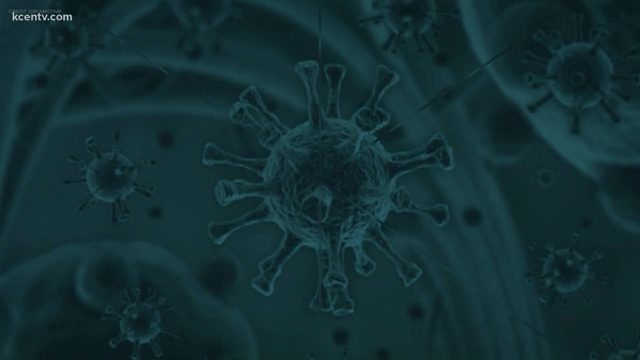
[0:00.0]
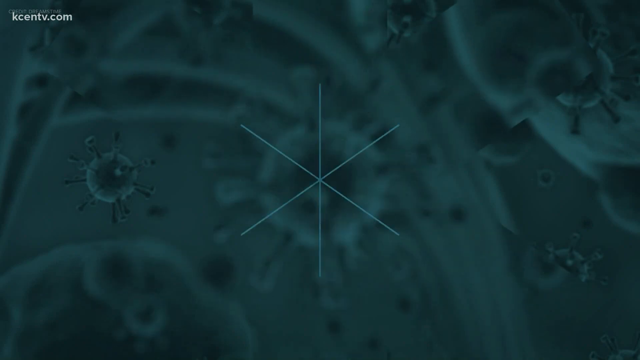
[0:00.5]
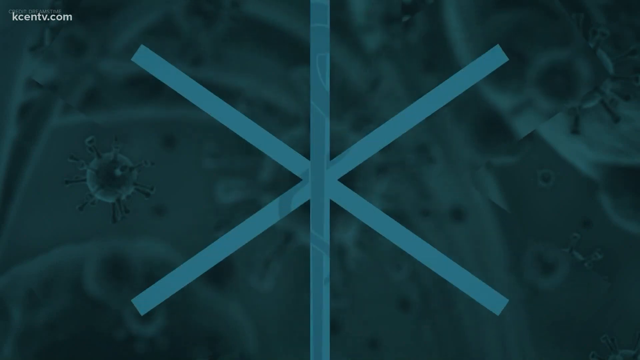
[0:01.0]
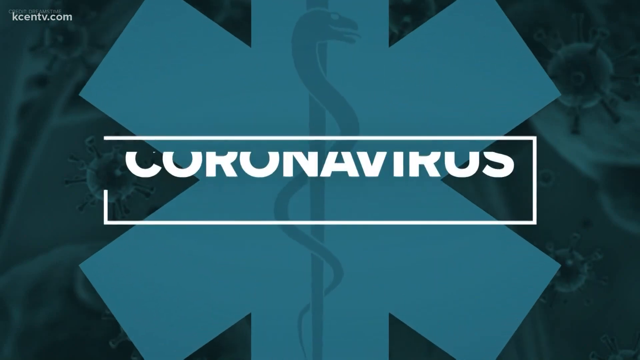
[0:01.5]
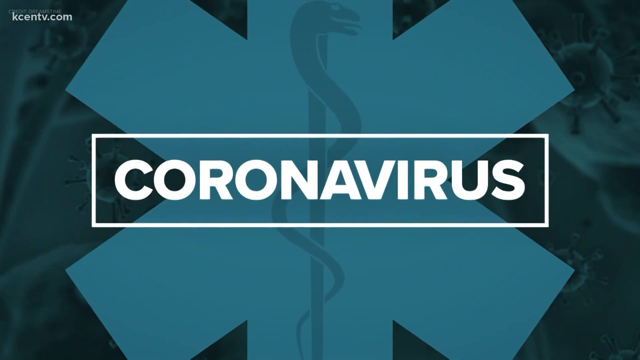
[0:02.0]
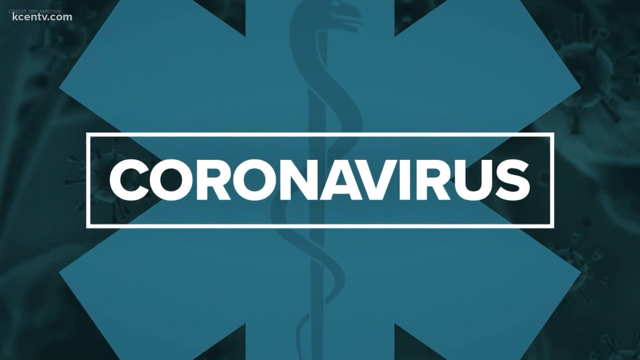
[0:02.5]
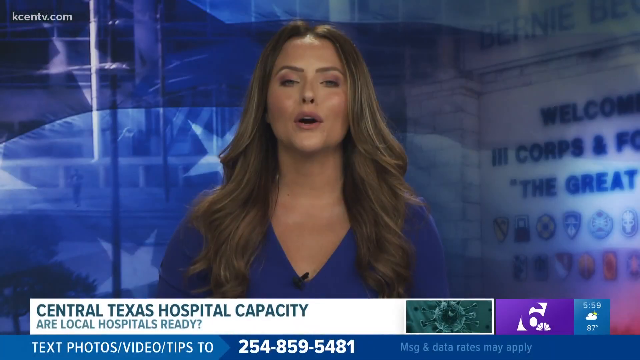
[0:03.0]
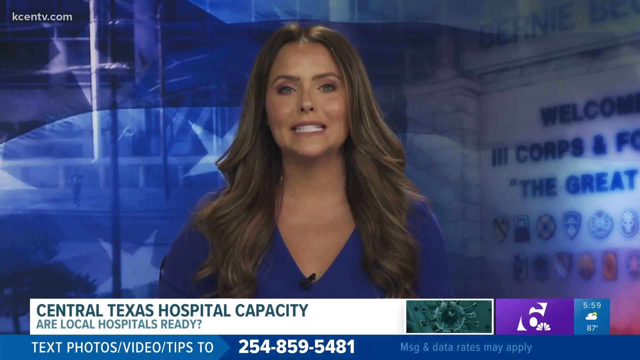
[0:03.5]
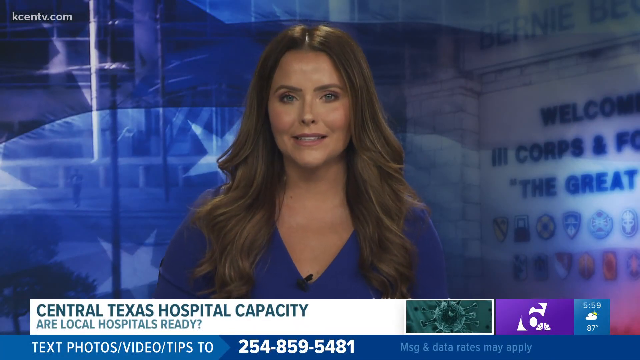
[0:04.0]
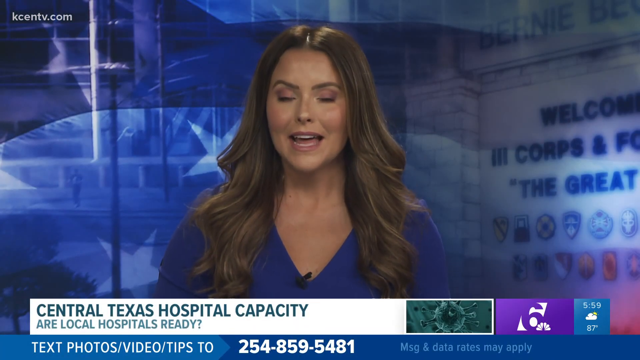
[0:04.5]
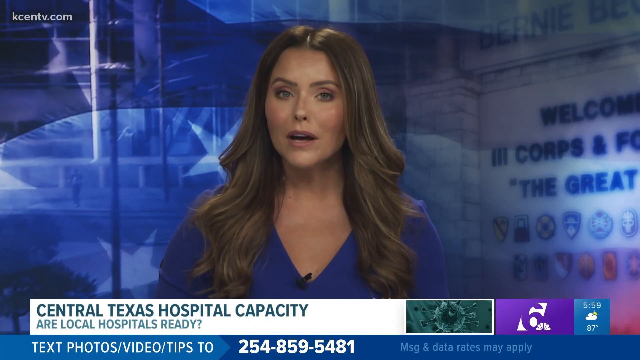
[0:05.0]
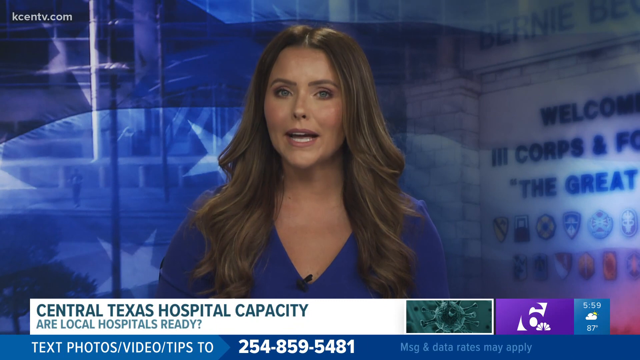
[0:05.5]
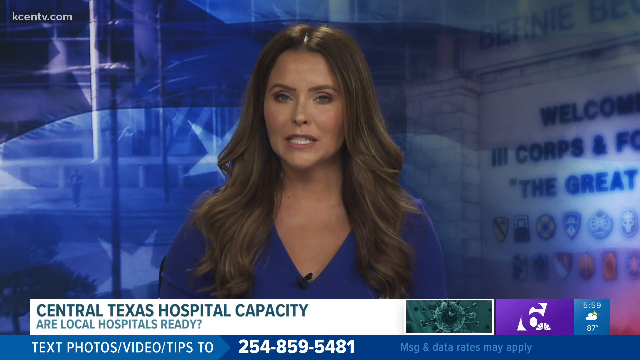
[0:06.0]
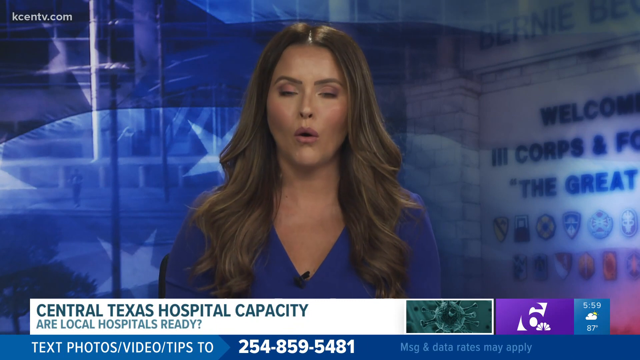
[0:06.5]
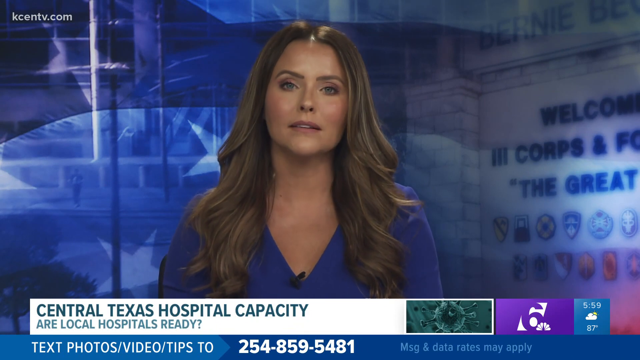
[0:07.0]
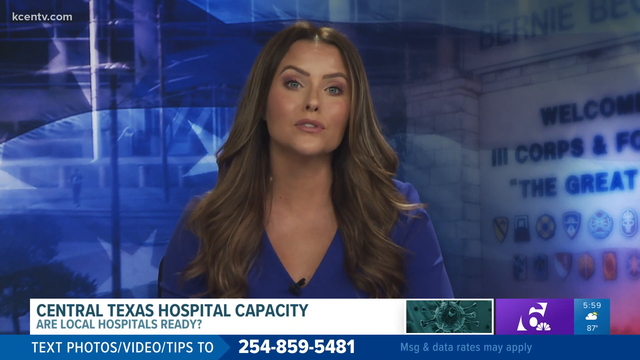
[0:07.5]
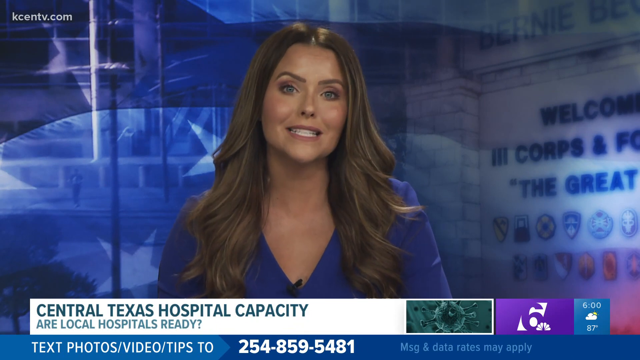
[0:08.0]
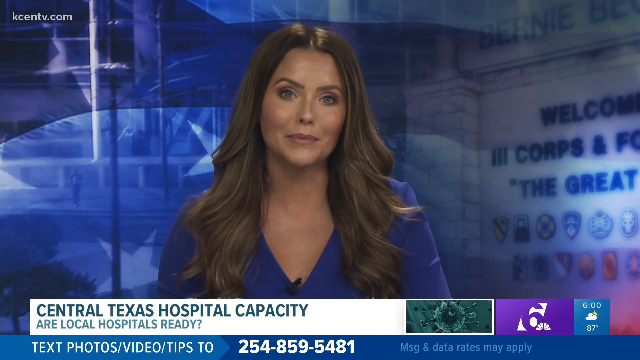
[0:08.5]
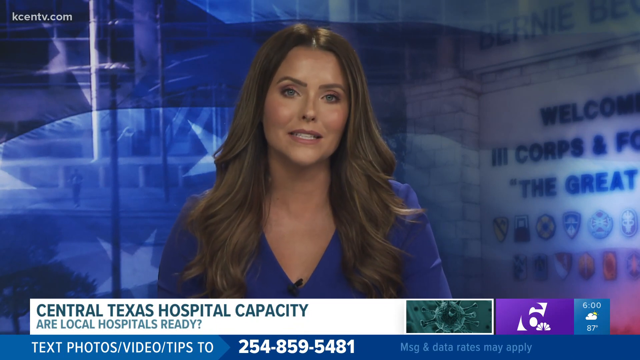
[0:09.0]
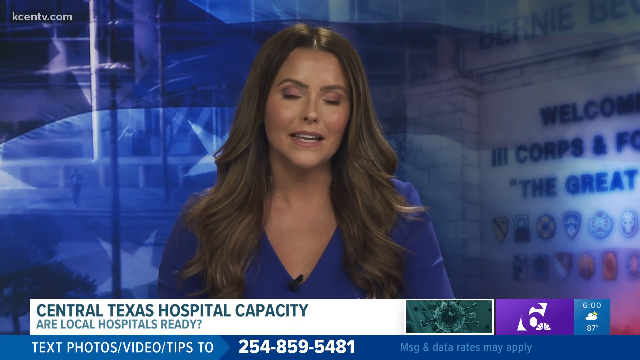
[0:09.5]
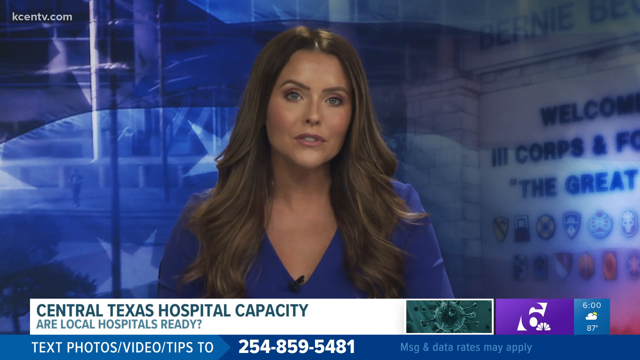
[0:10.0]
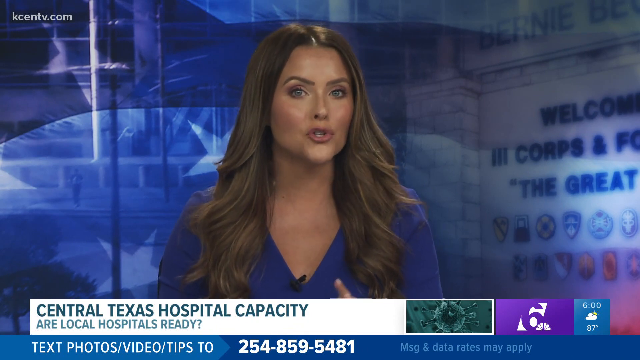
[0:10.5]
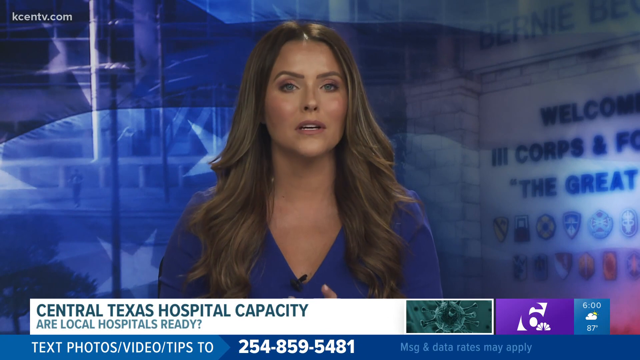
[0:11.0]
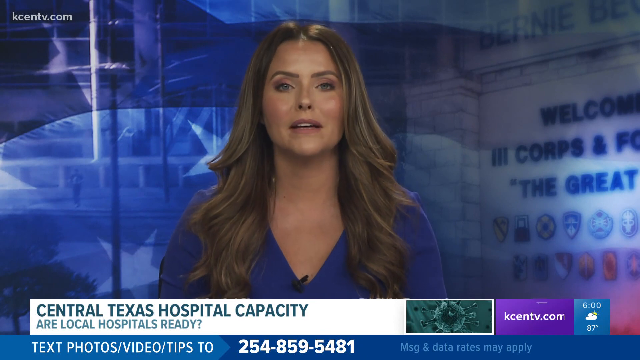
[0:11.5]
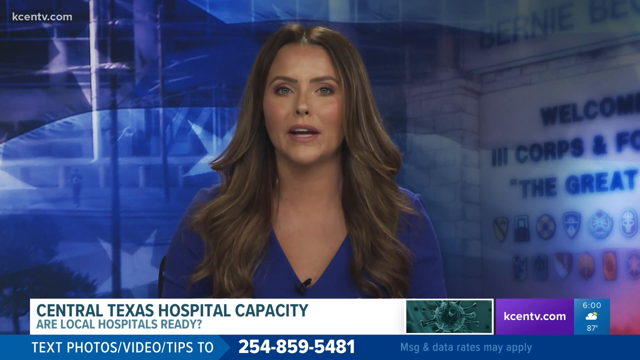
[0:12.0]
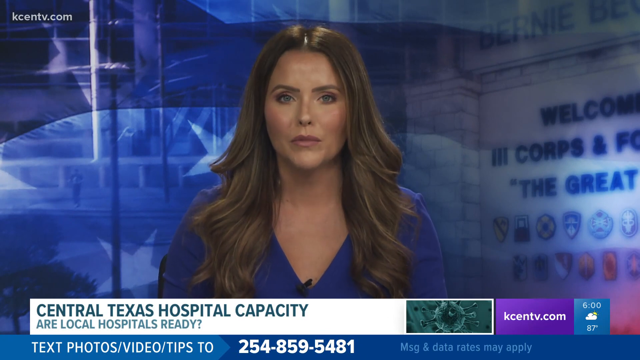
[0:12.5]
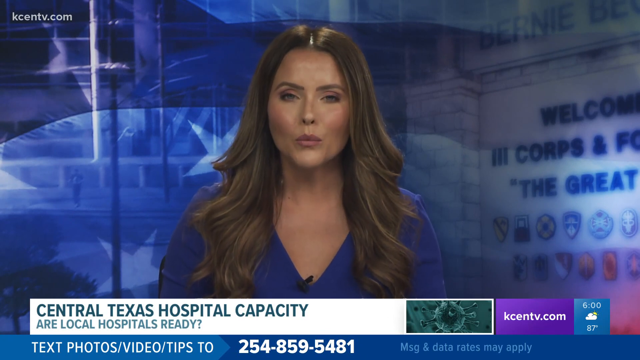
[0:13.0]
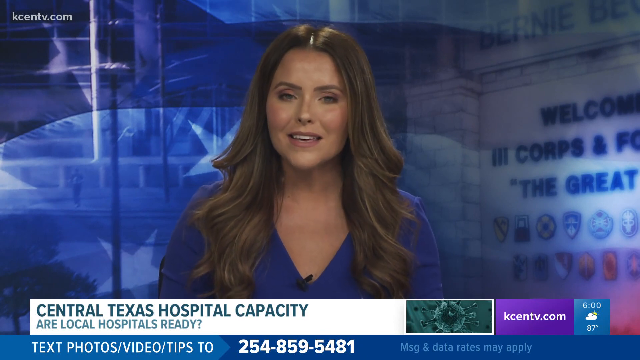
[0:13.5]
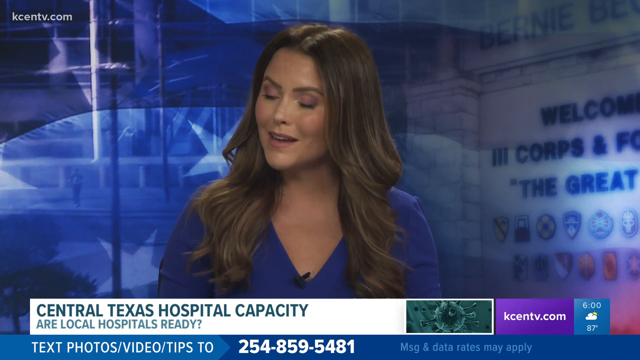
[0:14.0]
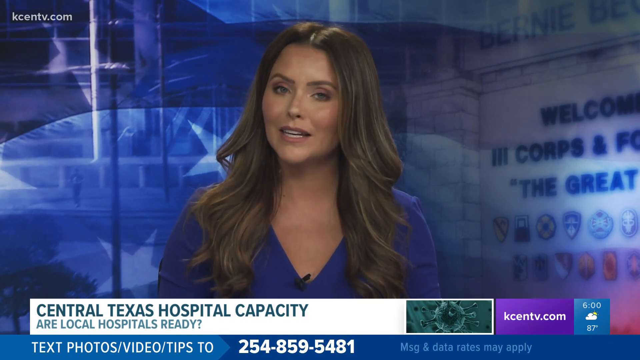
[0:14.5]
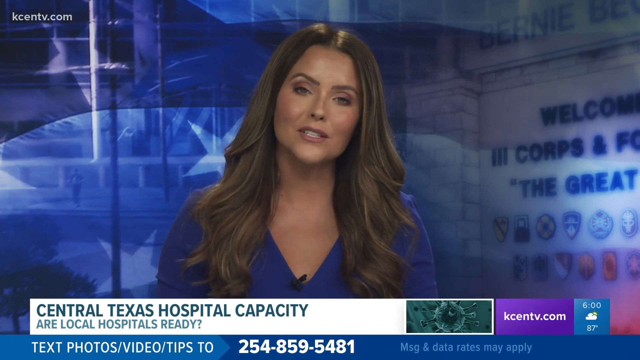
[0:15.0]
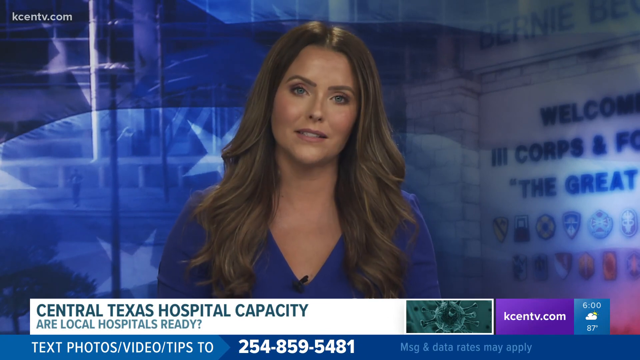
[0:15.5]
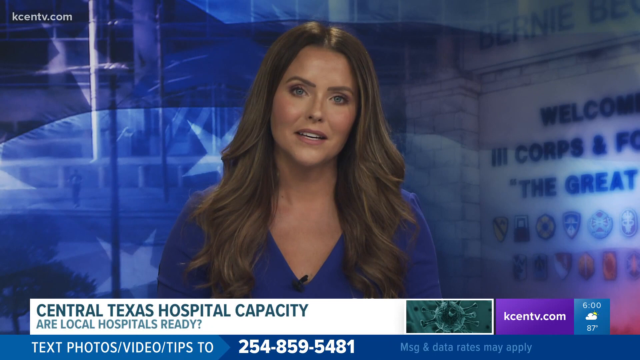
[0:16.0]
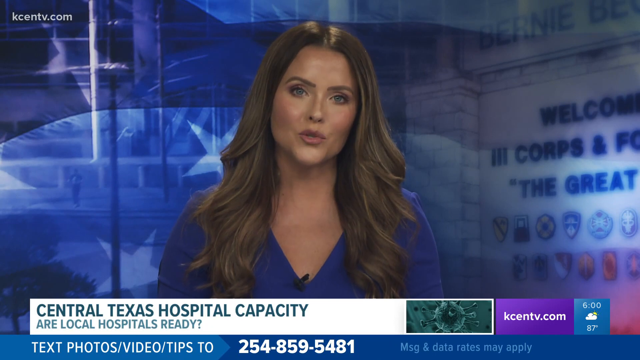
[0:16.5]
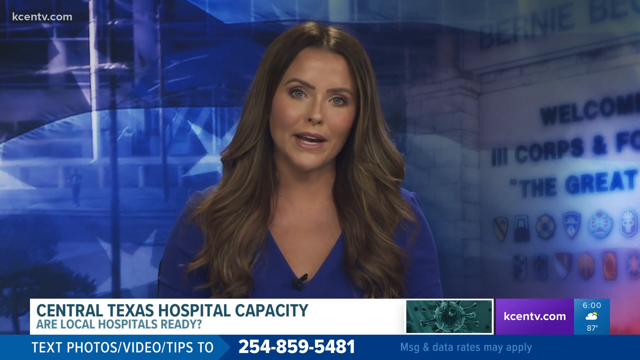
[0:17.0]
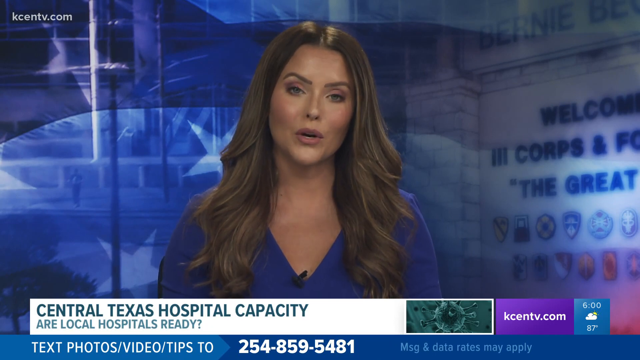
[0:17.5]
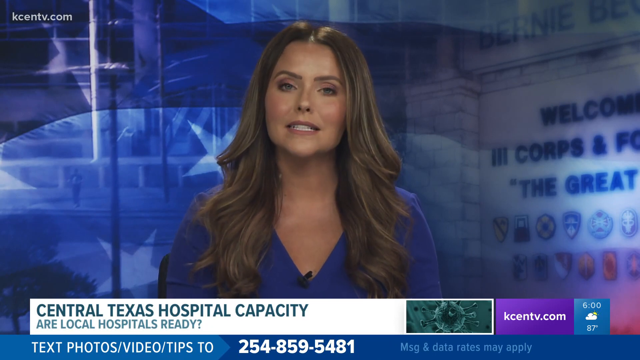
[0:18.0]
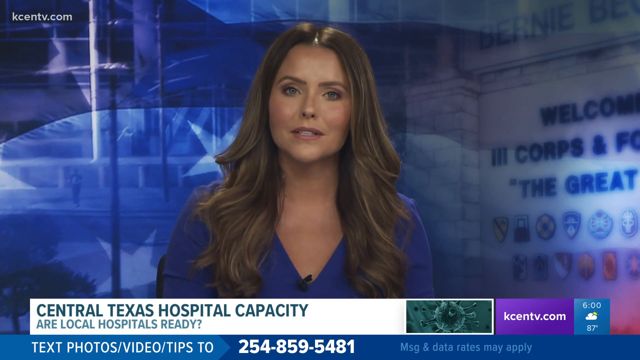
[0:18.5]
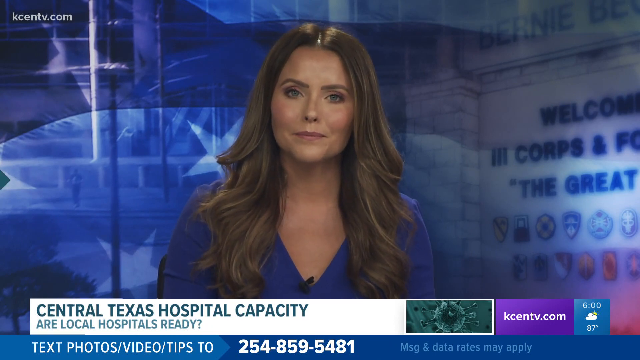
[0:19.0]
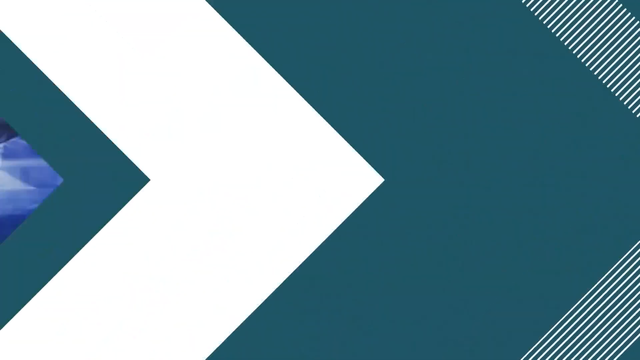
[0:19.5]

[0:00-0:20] The video opens with some kind of digital graphic images of the coronavirus in a teal color, and "coronavirus" appears on screen in white capitals. Shortly after, a news reporter appears with the headline "Central Texas hospital capacity". She looks fairly young, perhaps no older than her early 30s, with long, medium to dark brown hair in a long, very loose, wavy, featherish style. She wears what looks like a blue shirt, possibly a dress, with a microphone clipped in the middle, and there is a light blue background behind her. On screen there is a phone number to call or text photos and video tips, and a URL for the news, "KCENTV.com", suggesting KCEN is probably the name of the channel. In the bottom right corner are the number six and the NBC peacock logo, apparently marking a local NBC affiliate, and the bottom corner also shows 6 o'clock, 87 degrees and partly cloudy. The video then cuts to a man in a separate room with a large monitor next to him.